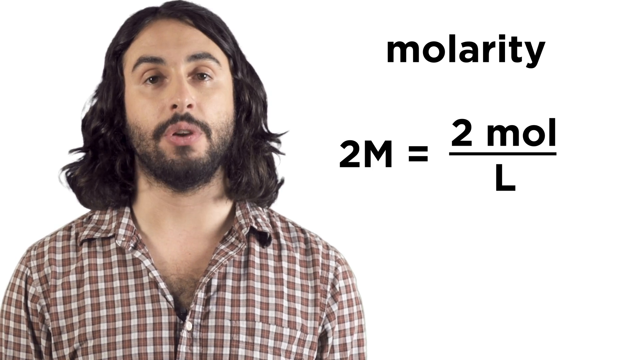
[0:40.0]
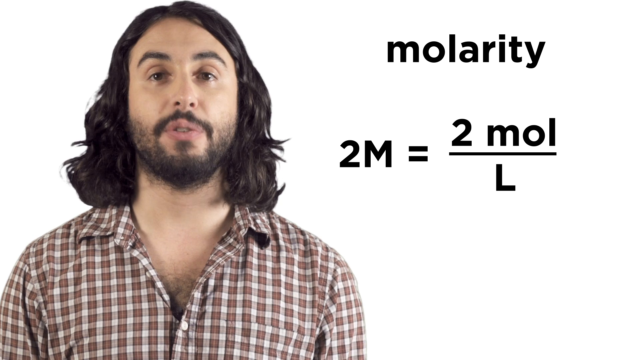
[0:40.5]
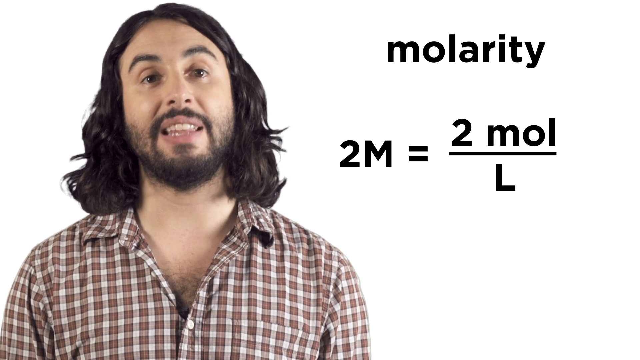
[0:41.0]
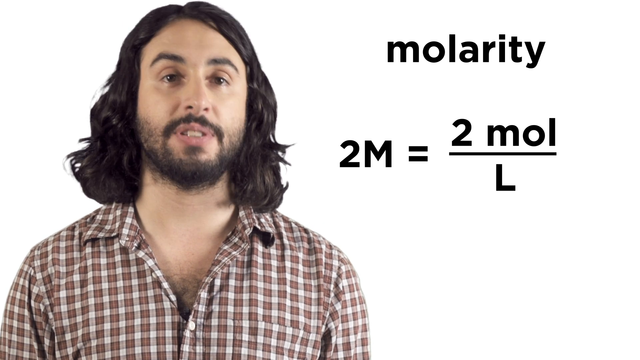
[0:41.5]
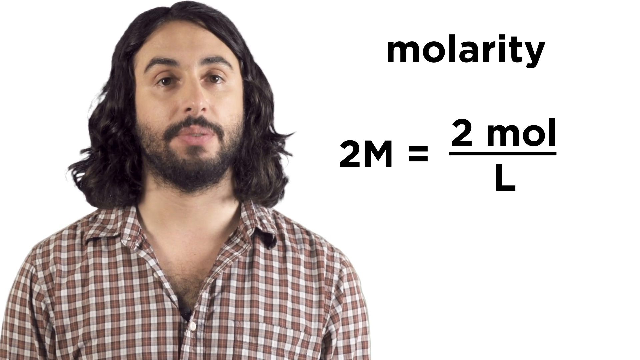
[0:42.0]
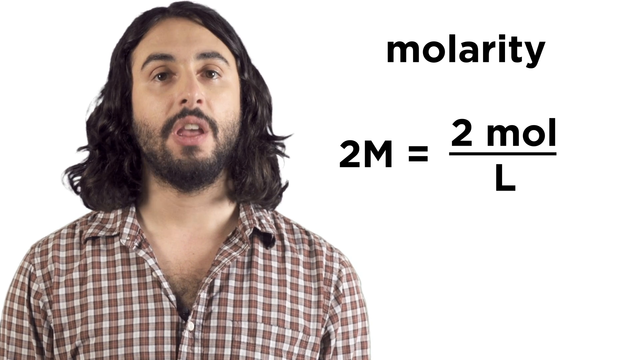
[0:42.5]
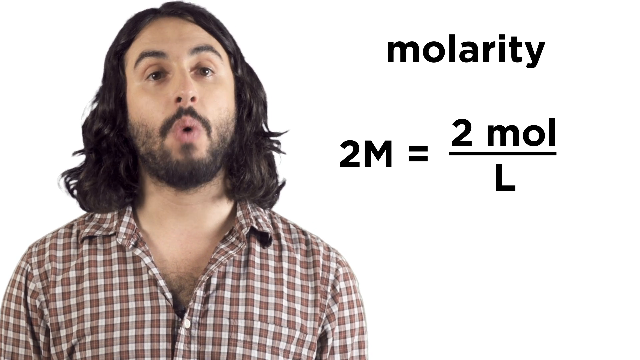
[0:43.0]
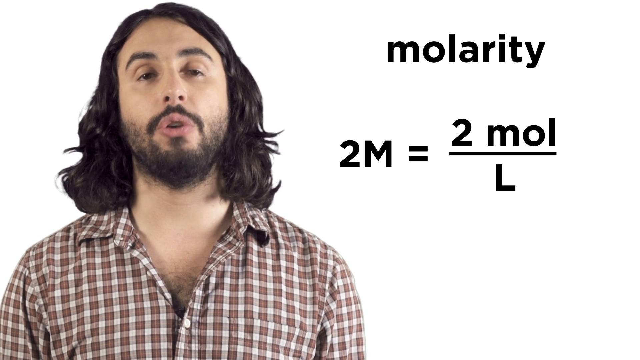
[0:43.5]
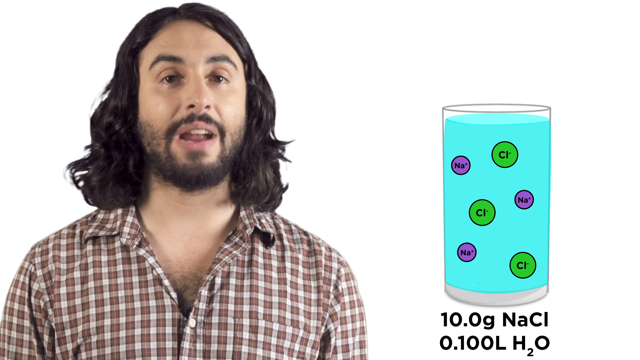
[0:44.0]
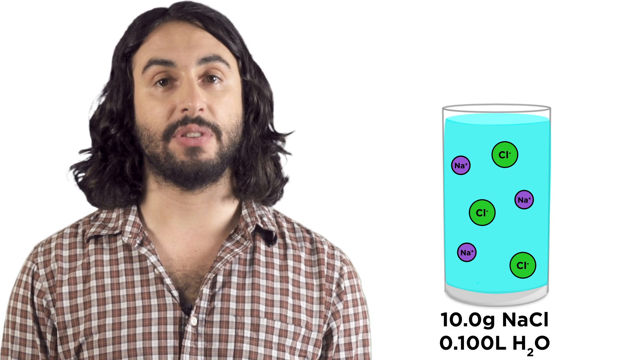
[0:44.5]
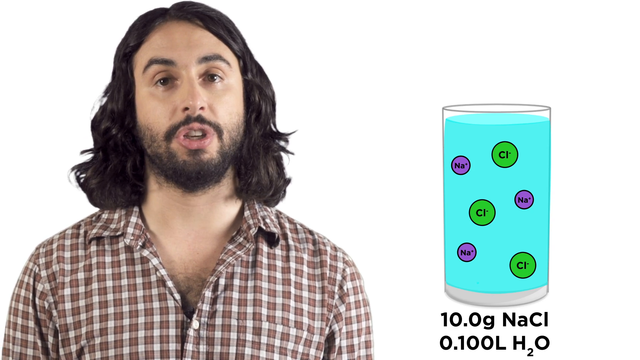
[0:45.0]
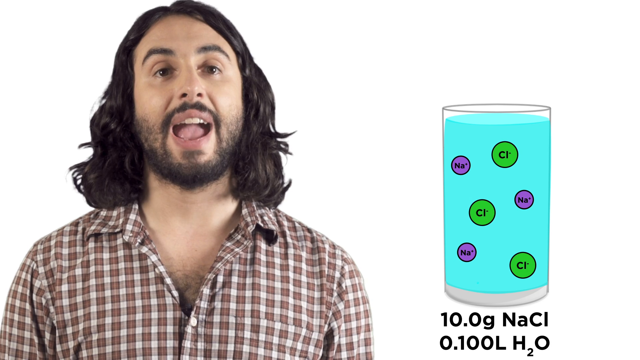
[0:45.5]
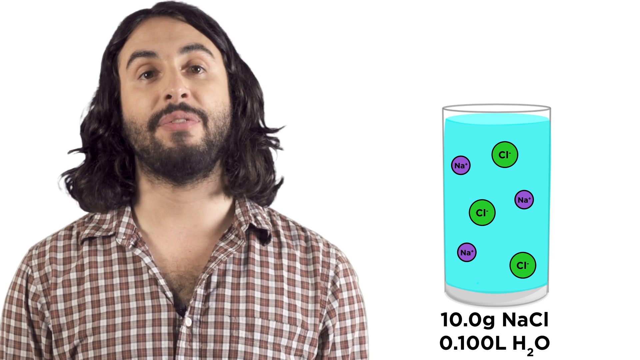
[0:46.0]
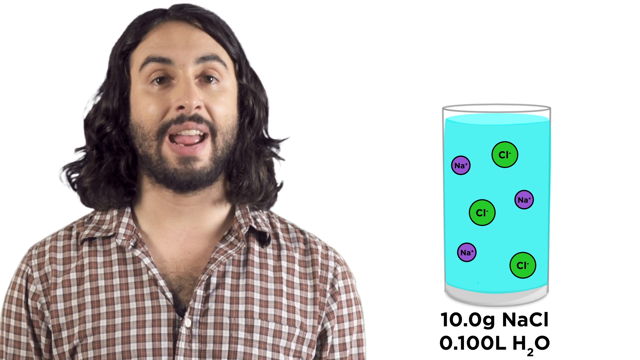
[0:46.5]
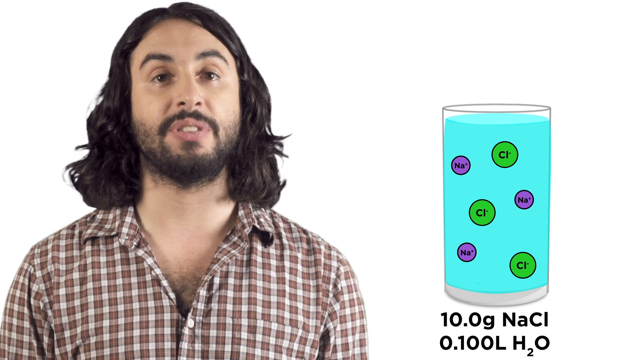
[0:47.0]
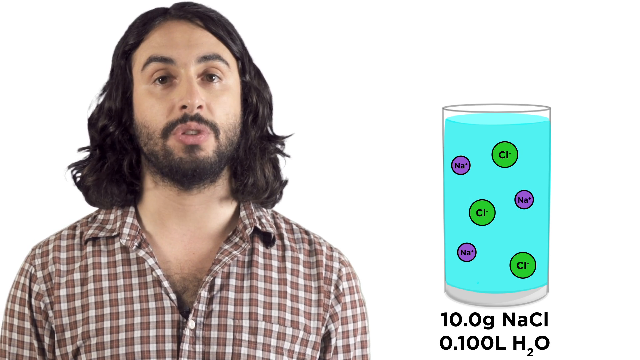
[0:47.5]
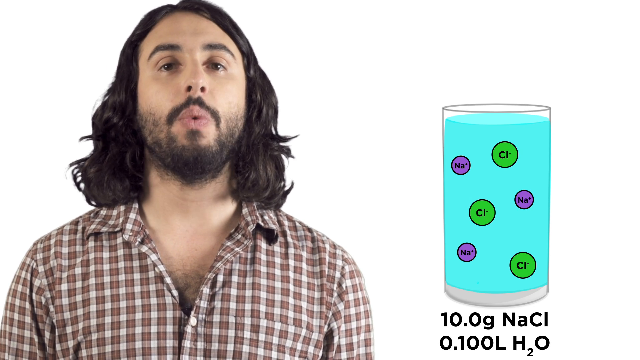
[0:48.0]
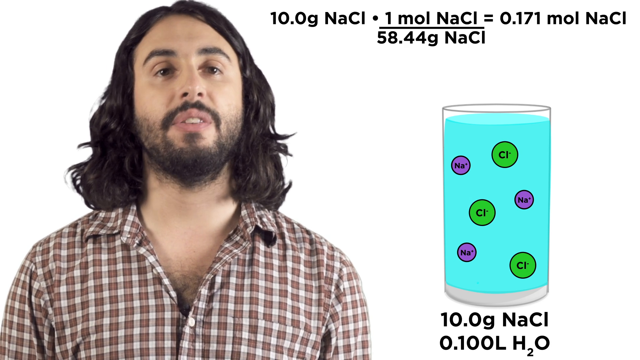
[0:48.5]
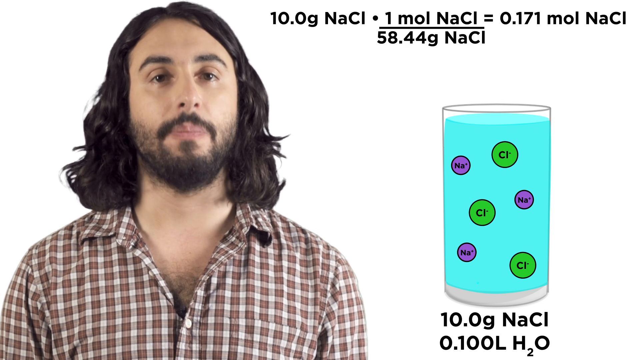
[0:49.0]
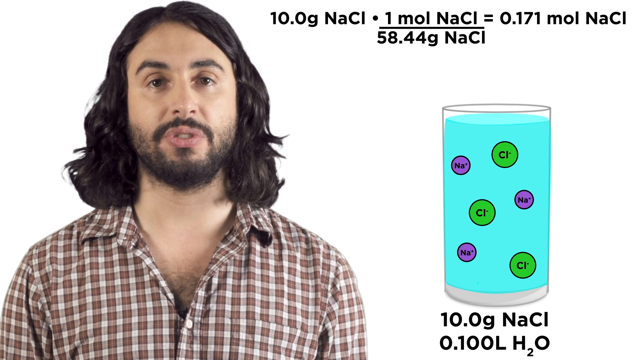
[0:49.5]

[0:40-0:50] A man who is in his 30s, with long black hair down to his neck and a black beard, wears a brown and white plaid shirt. He is on the left side of the screen. On the upper right is the word "molarity" in black, with the equation "M = 2 mole/L" below it, using a capital M and a capital L. The man talks, and then the equation and other text go away. On the man's right side appears a drawing of a glass of water containing six circles: three small purple circles with "NA" inside and three larger green circles with "CL" inside. Beneath the glass is "10.0 G NaCl", and under that "0.100 H2O". In the top right of the screen is the equation "10.0 G NaCl × 1 mole NaCl / 58.44 G NaCl = 0.171 mole NaCl".